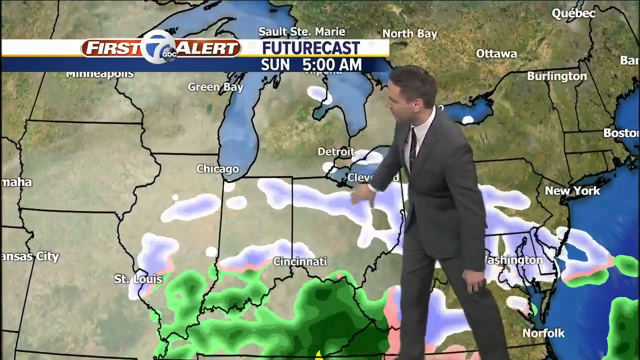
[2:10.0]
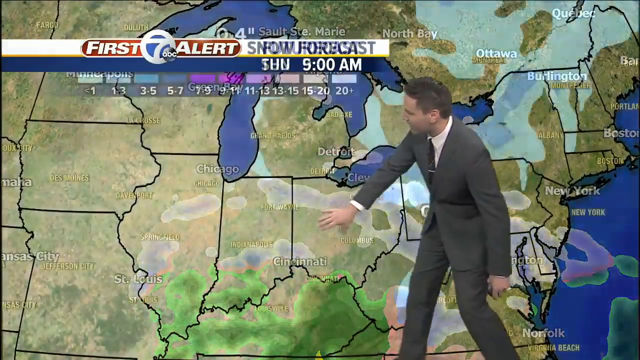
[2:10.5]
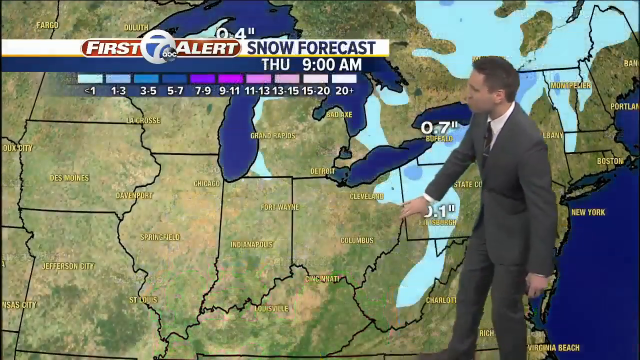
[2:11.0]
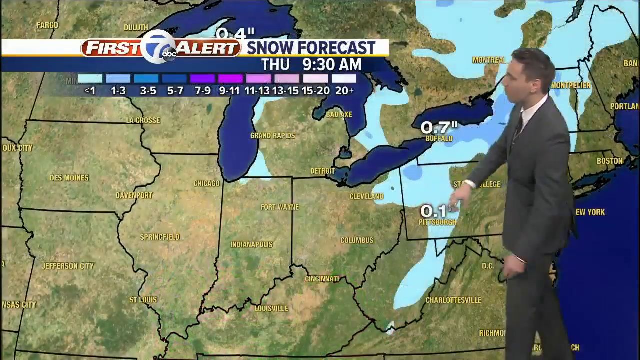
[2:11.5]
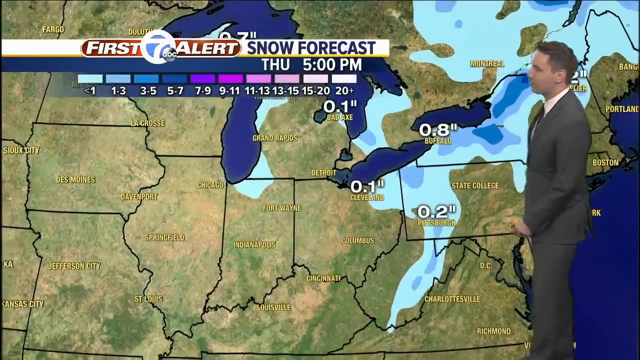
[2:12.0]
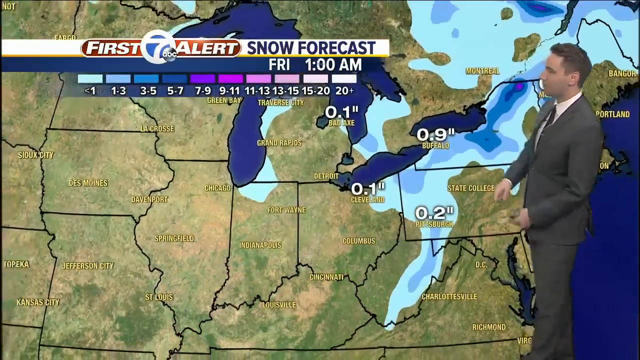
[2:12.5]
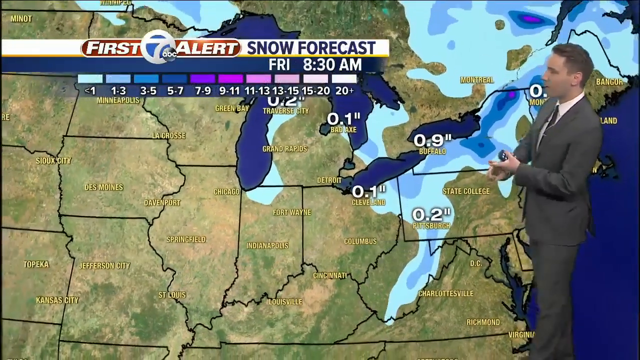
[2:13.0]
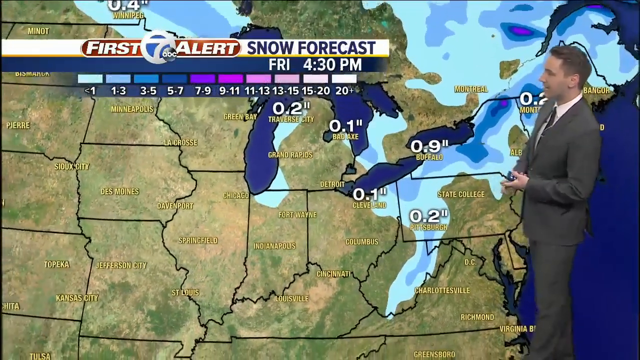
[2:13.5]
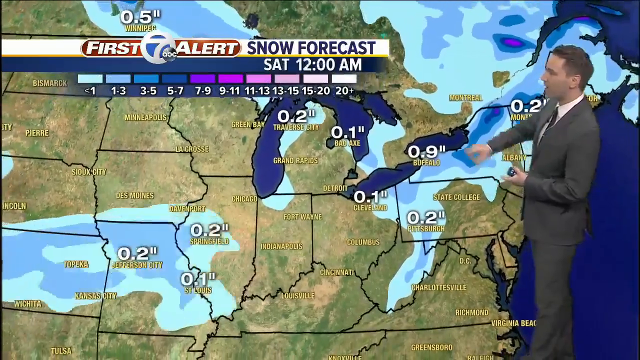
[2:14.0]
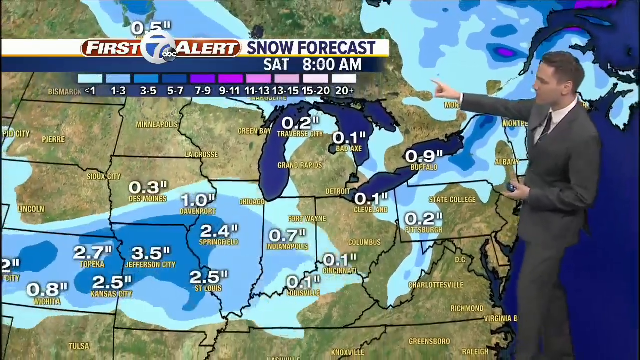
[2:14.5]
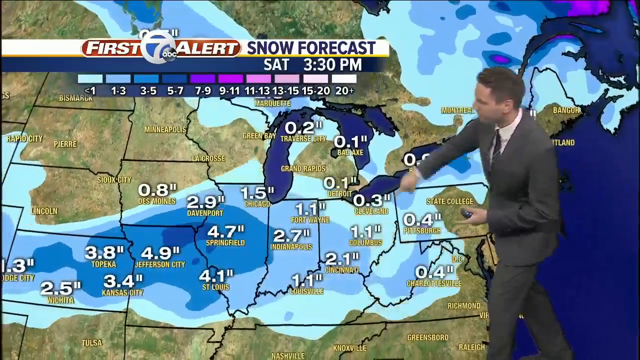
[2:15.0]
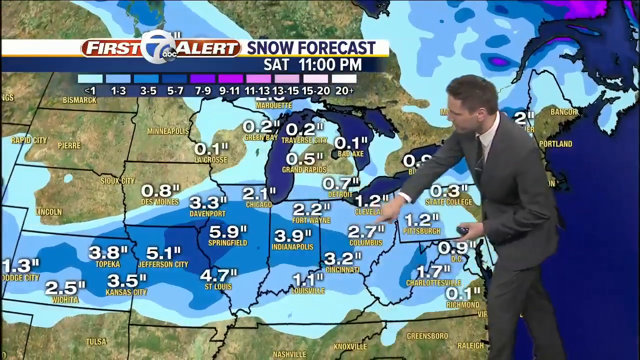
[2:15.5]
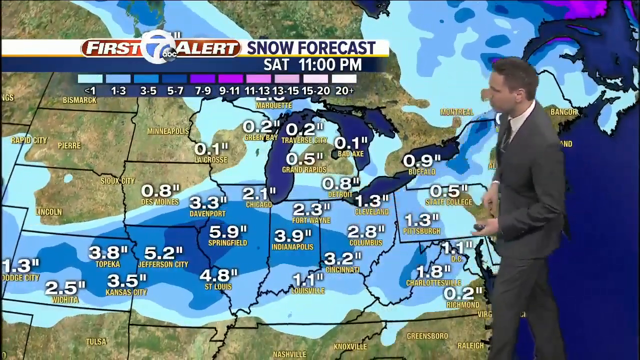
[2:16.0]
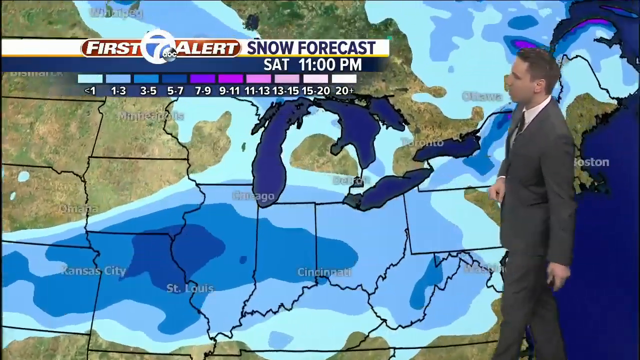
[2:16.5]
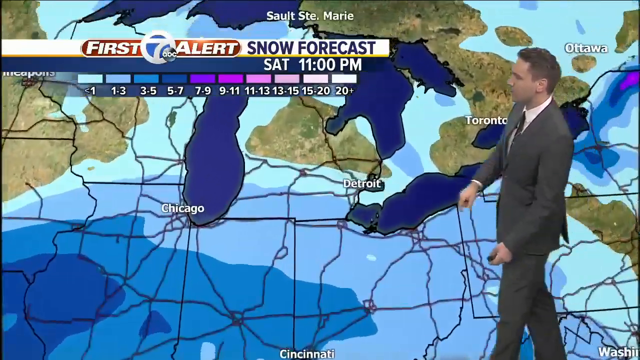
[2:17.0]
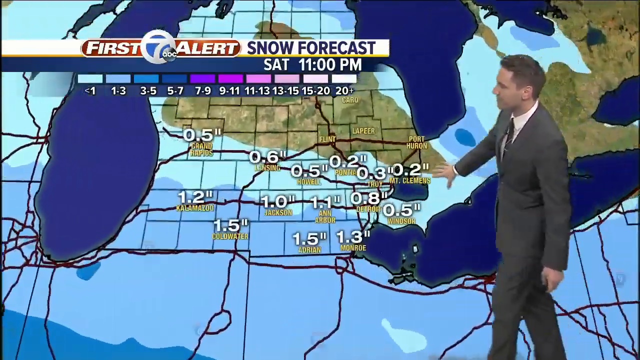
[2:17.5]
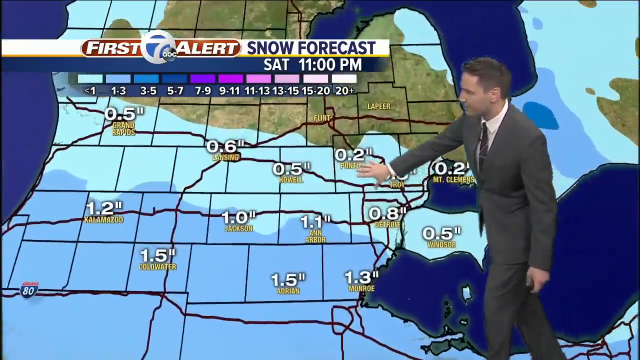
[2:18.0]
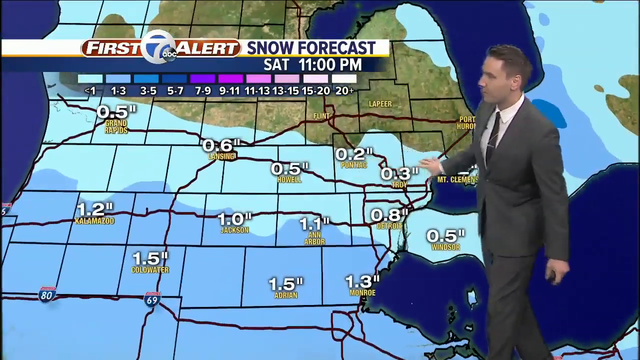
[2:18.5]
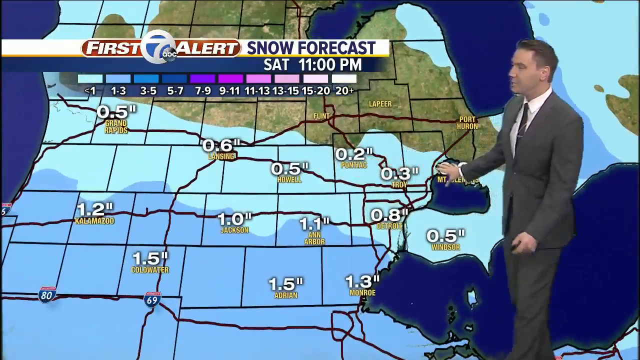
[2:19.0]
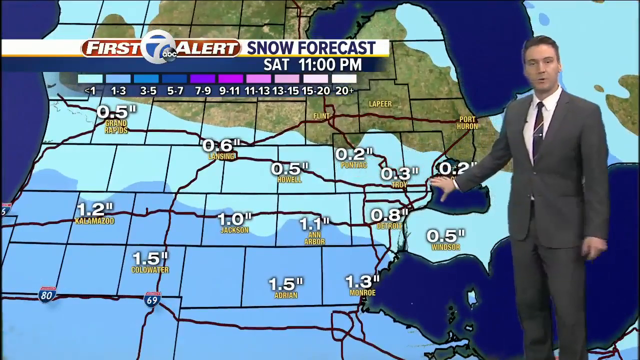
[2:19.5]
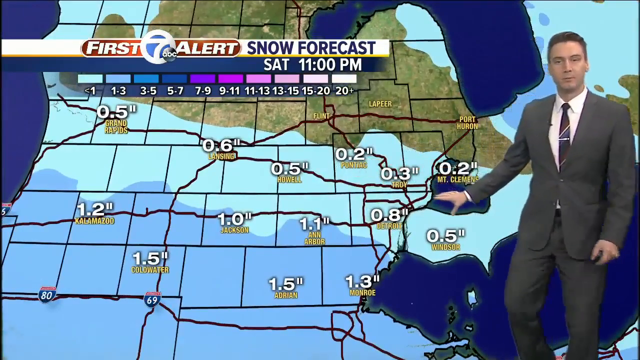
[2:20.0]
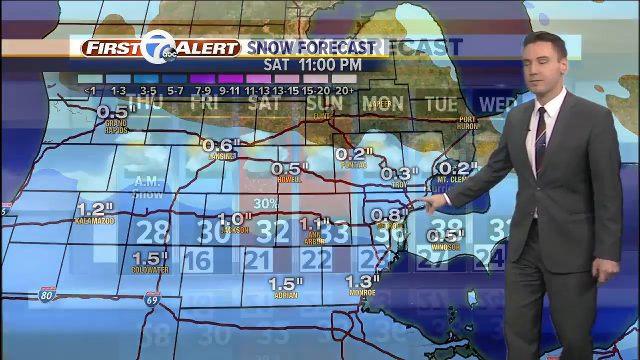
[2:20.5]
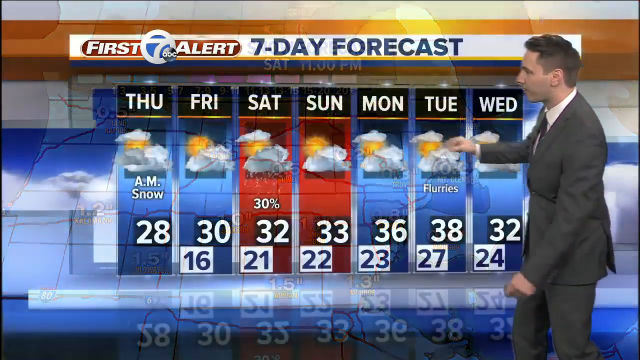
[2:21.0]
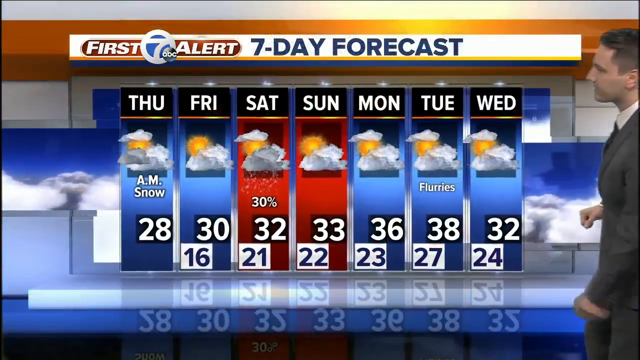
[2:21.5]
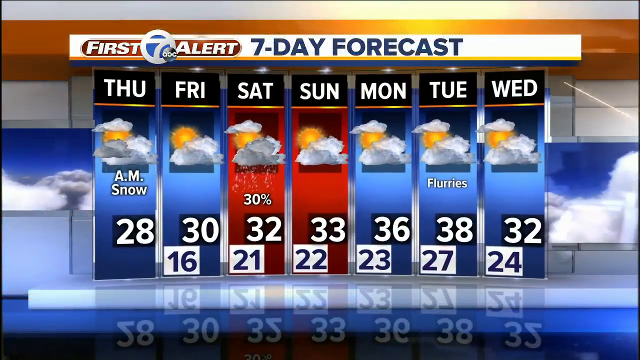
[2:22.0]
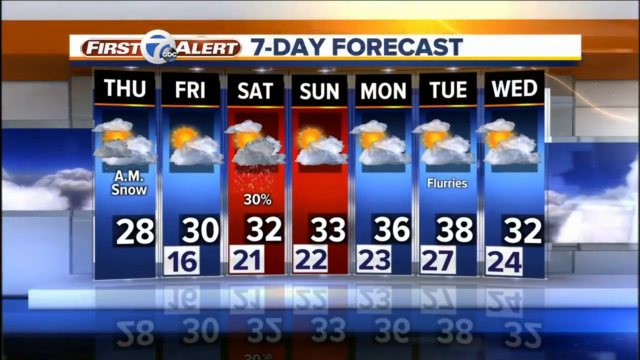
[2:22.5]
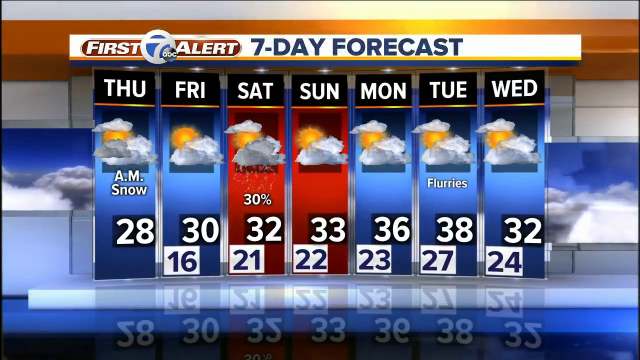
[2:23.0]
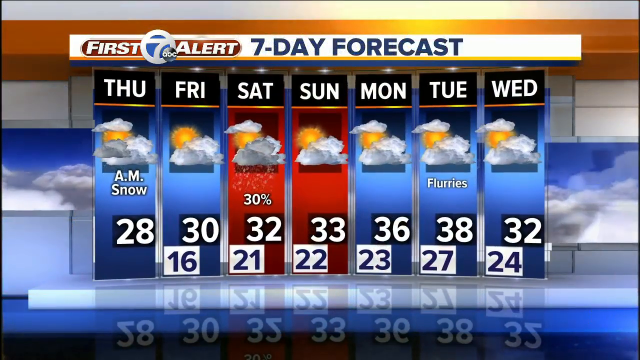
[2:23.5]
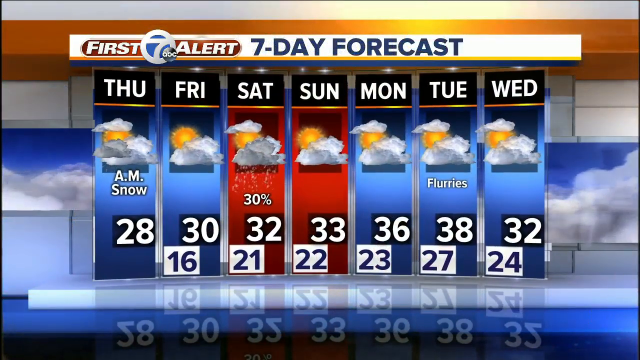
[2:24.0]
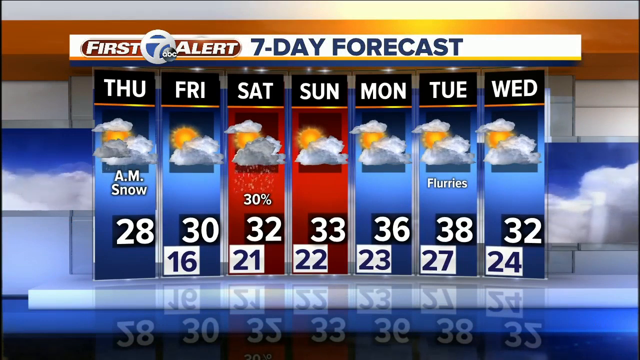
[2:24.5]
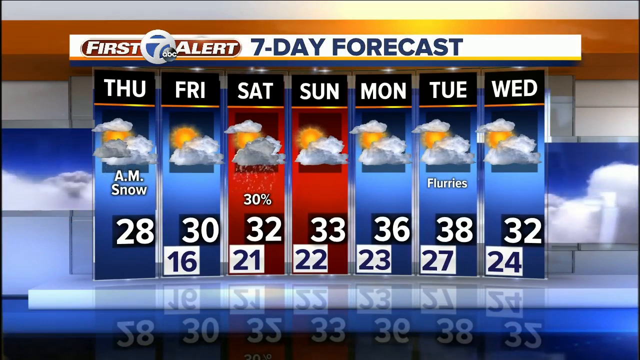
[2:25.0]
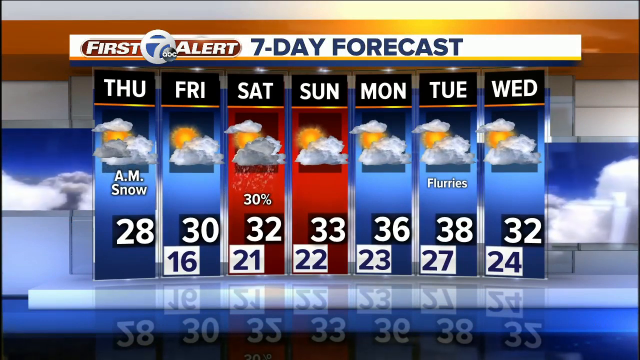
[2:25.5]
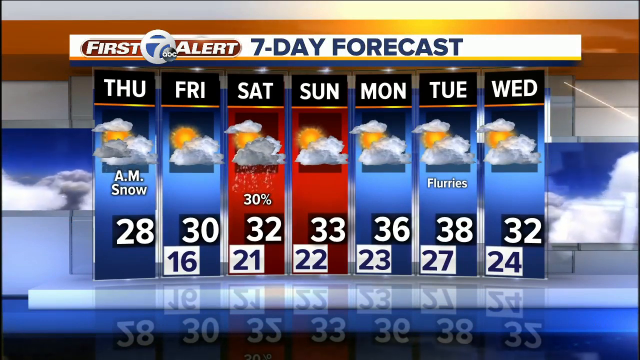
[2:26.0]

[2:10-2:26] "First Alert" and "7 ABC" are still on the screen, now with "futurecast Sunday 5 a.m." Kevin is in front of a map showing the Great Lakes area. The map is a little different: most of the clouds are gone, and as the map zooms out it fills with blue in different shades, possibly cold fronts, from very light blue to progressively darker blues, with a much darker, though not the darkest, blue in the center. The map zooms in closer to the lakes and shows numbers. A seven-day forecast appears with 28, 30, 32, 33, 36, 38 and 32 degrees and numbers along the bottom. The screen switches back to the table, where the blonde woman and the brunette woman are, and Kevin is back in his spot. They talk among themselves. The woman in blue makes a lot of arm and hand motions from the elbow down and pats herself on the back. The brown-haired woman talks at the same time as Kevin. A weather map of the Great Lakes area then appears and zooms in.